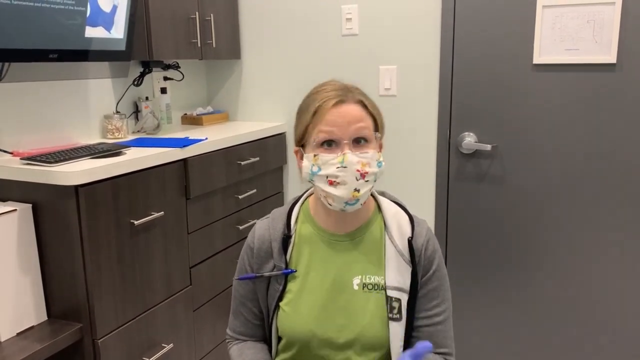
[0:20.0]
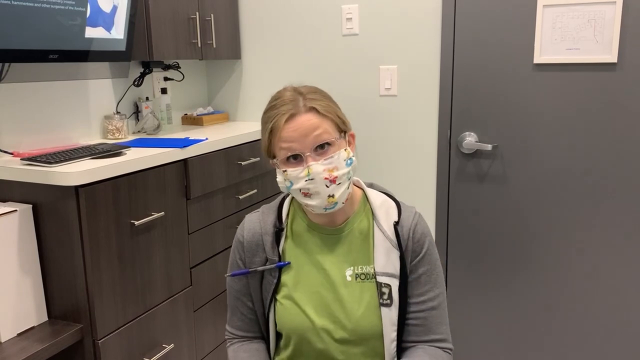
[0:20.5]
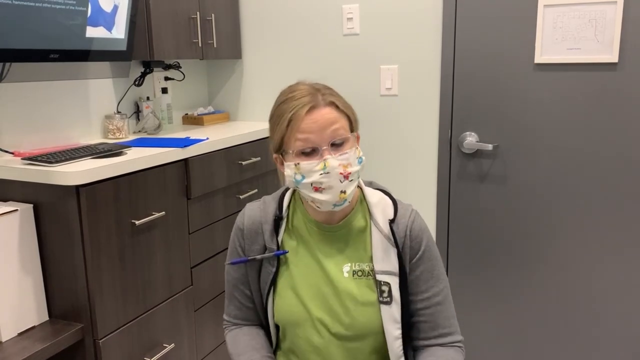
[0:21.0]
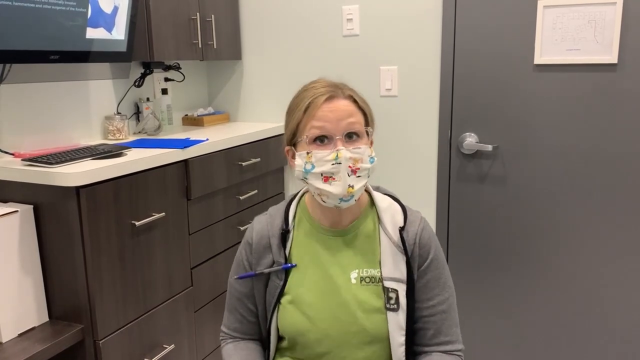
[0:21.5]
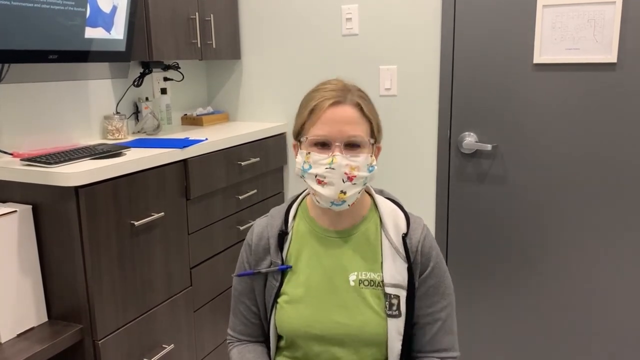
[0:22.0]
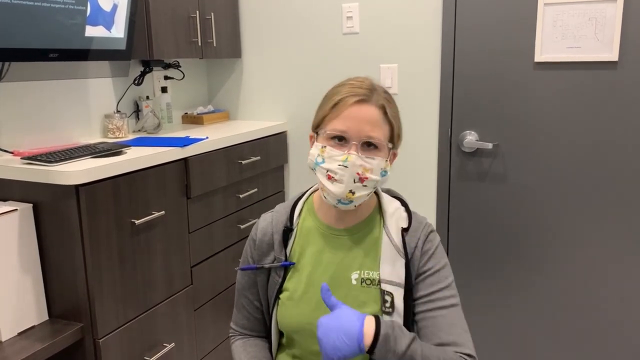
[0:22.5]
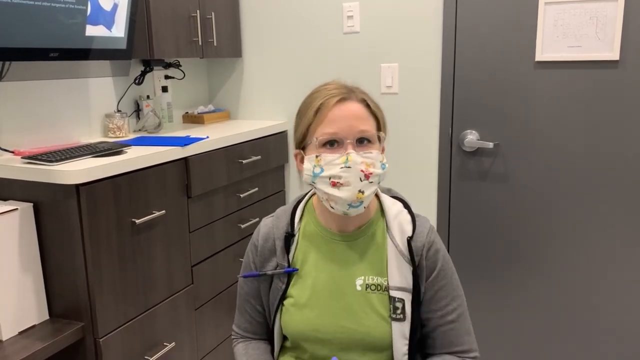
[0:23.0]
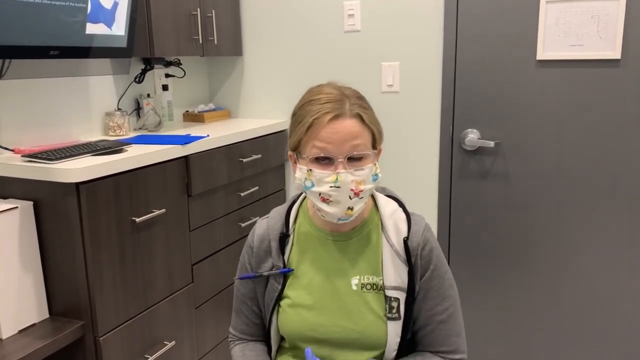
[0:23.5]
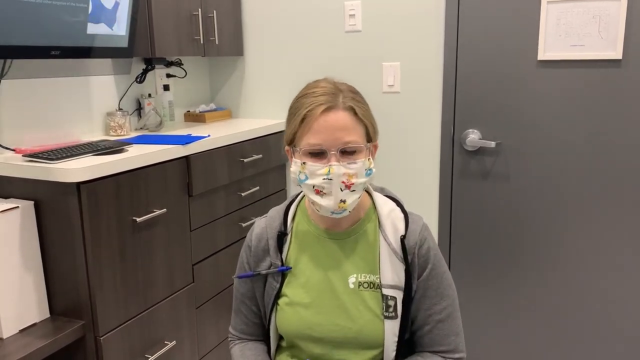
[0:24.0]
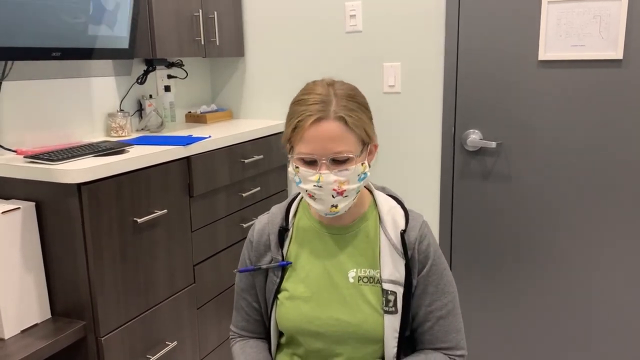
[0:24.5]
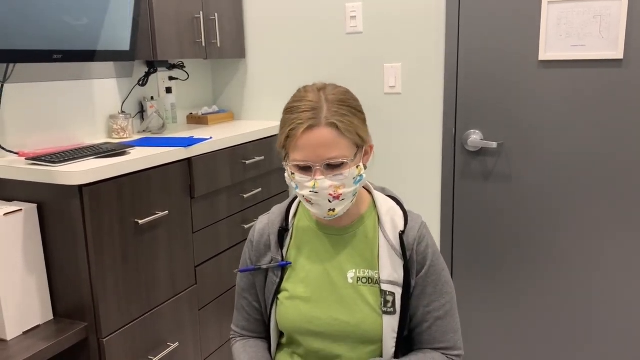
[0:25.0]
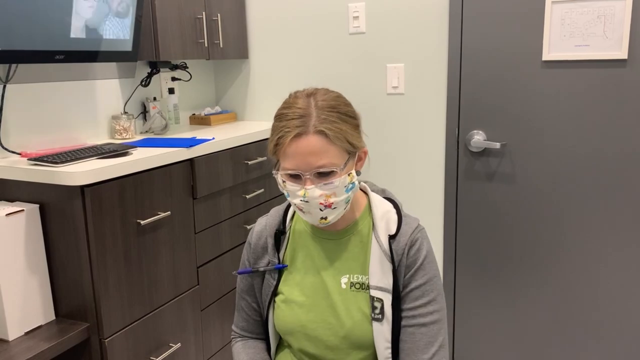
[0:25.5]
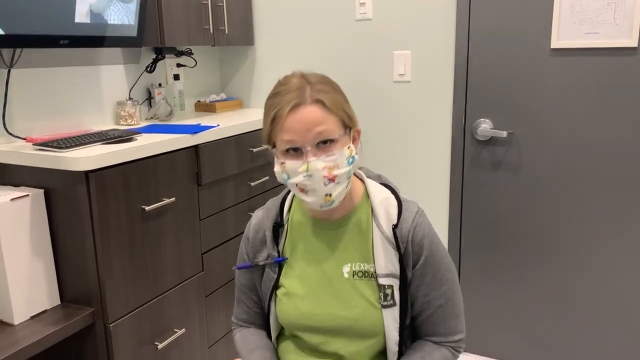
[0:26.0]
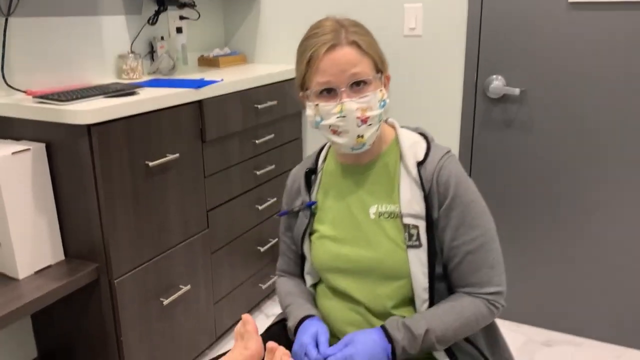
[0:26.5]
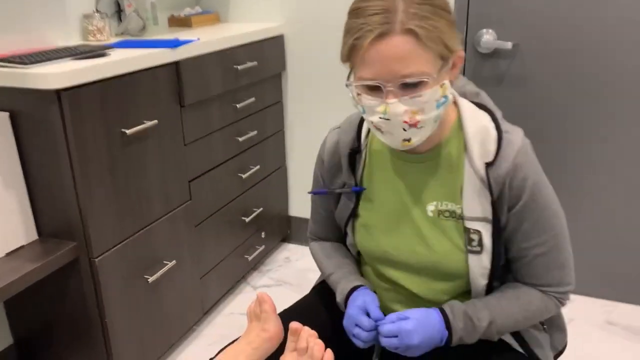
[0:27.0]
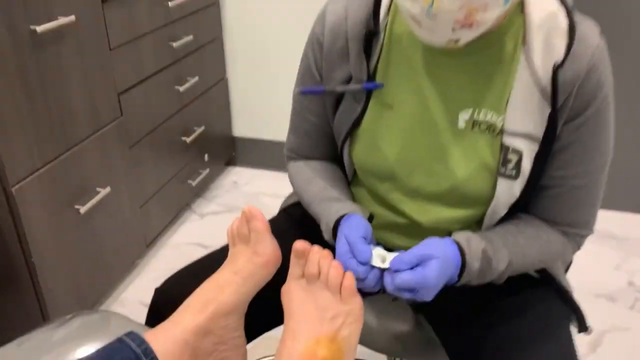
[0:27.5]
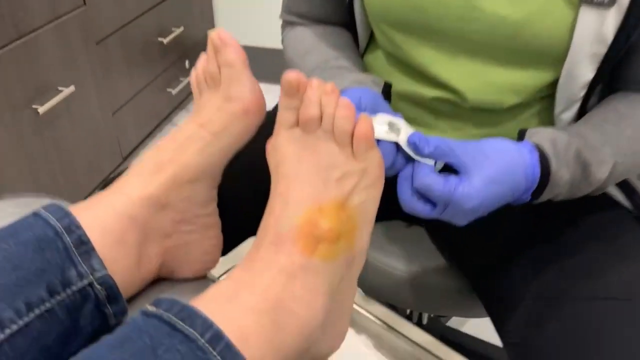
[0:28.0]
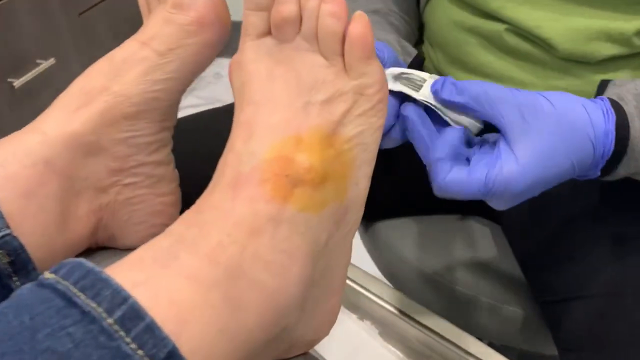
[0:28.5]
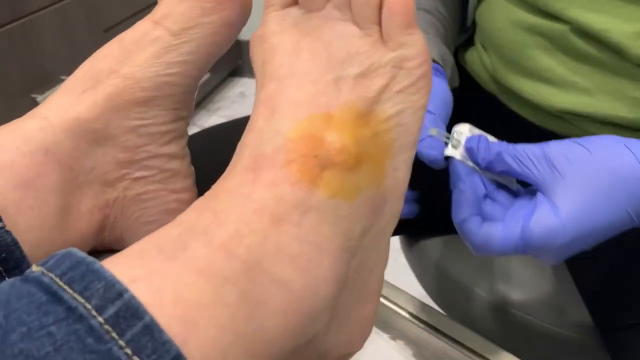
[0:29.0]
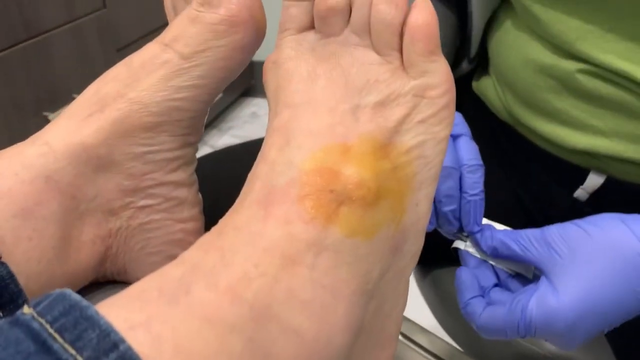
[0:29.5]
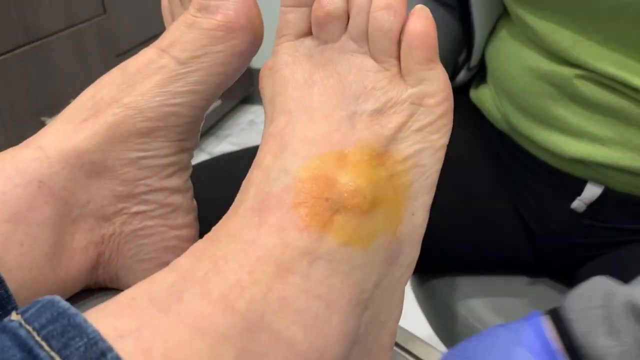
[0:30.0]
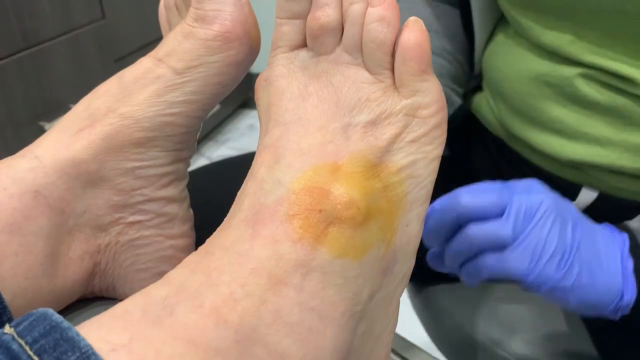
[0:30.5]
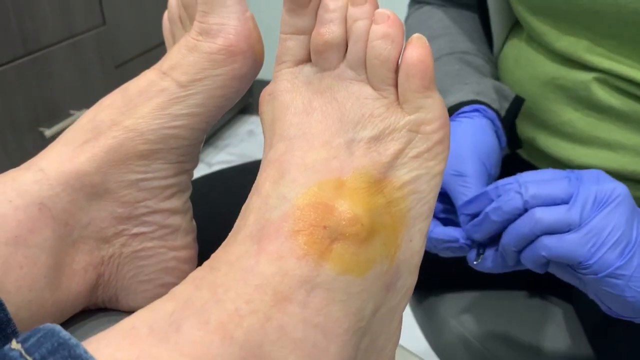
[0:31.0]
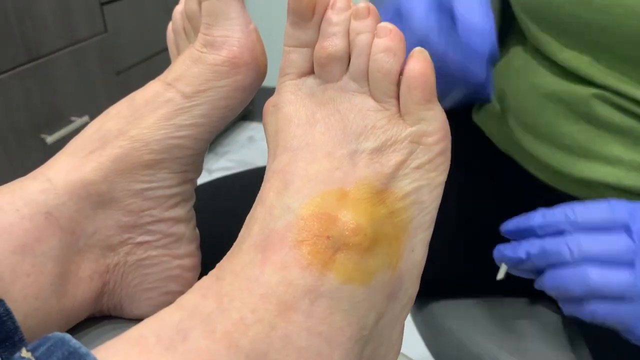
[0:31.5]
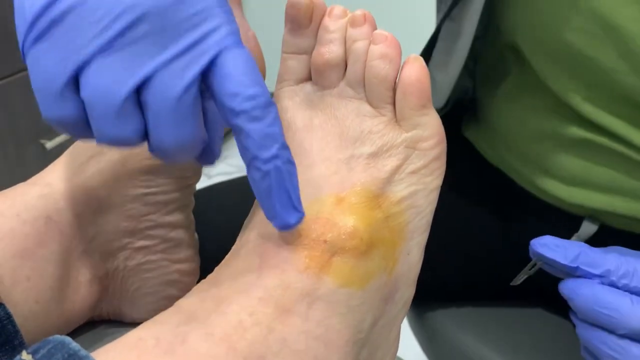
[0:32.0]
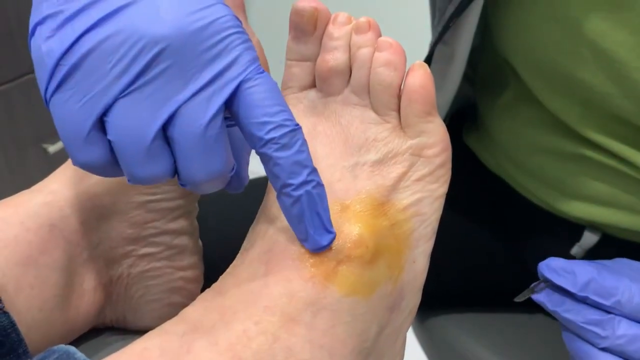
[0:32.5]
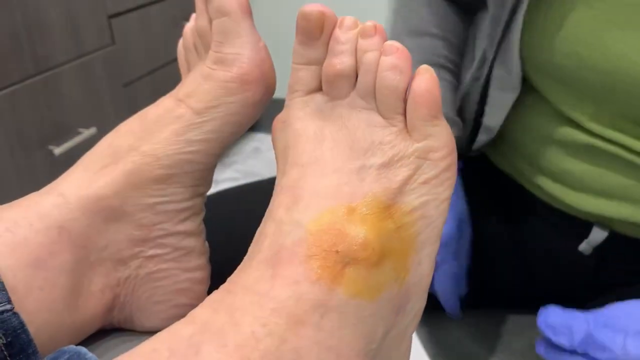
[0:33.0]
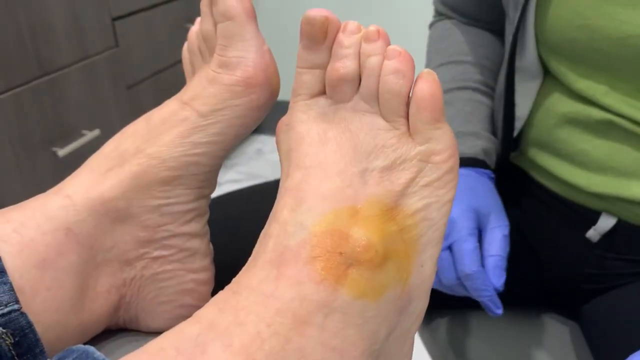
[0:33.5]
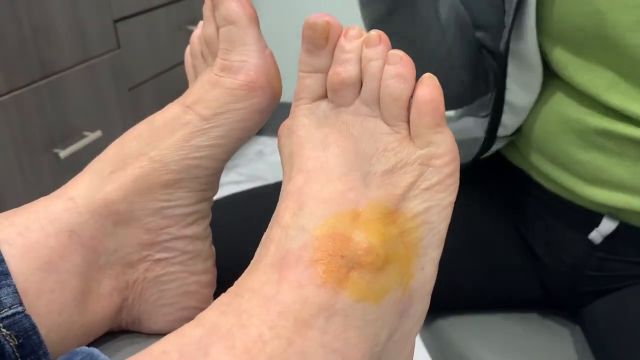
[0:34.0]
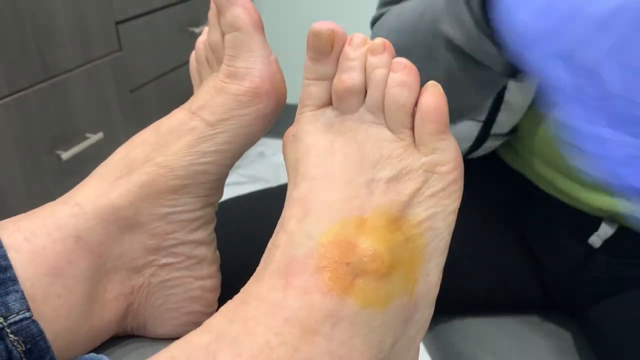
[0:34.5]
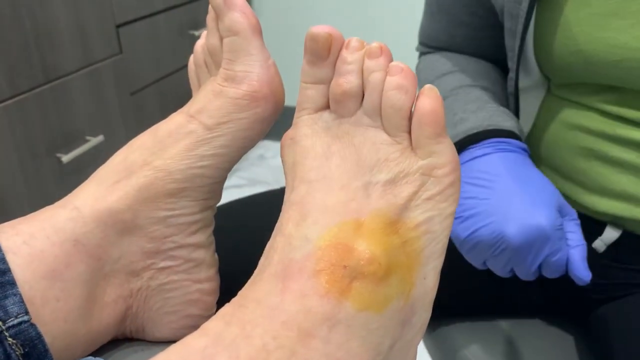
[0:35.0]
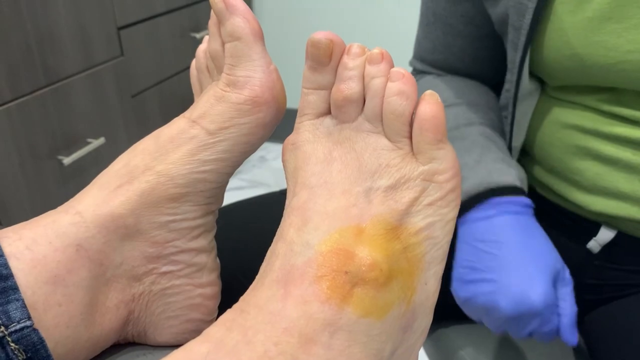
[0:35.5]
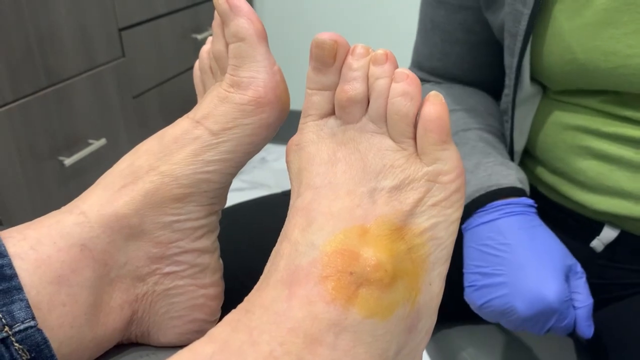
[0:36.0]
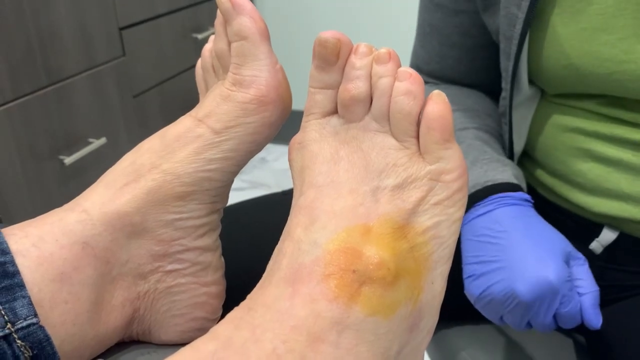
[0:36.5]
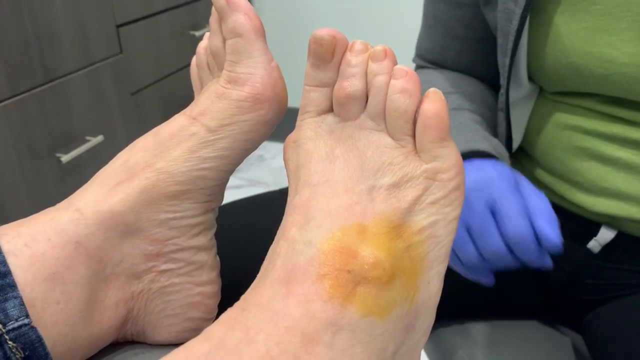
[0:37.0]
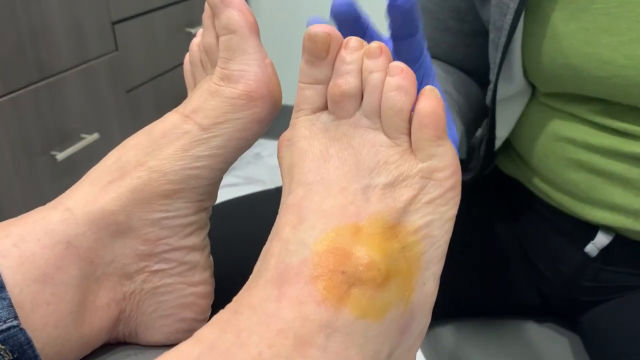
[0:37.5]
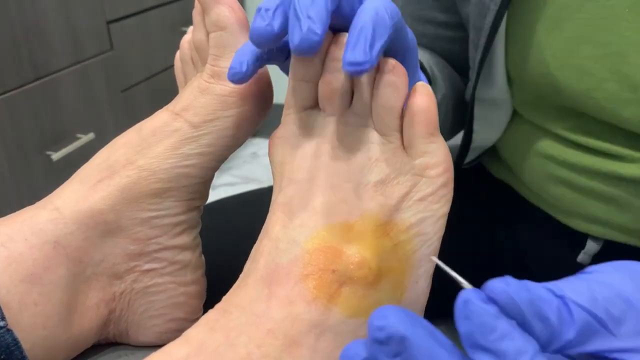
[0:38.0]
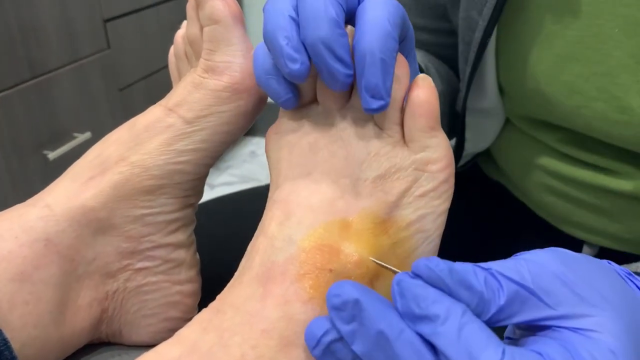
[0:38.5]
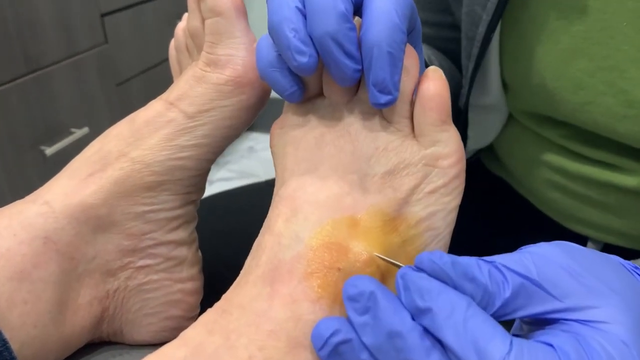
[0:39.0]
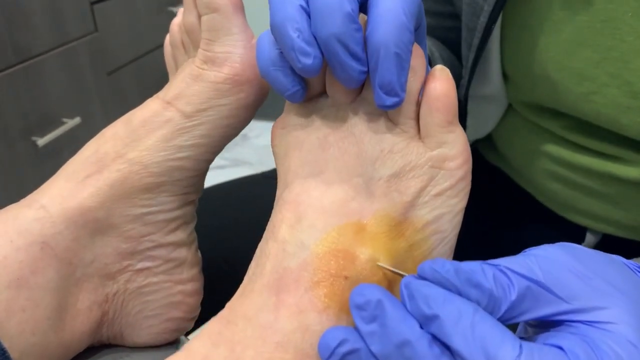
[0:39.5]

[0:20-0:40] A woman with blonde hair makes a lot of hand gestures while talking directly to the camera. The view then moves to the patient's foot, showing a condition in which there is a bump on the top of the foot. The woman uses a metal needle on the foot to try to alleviate the condition. She is also wearing a mask.